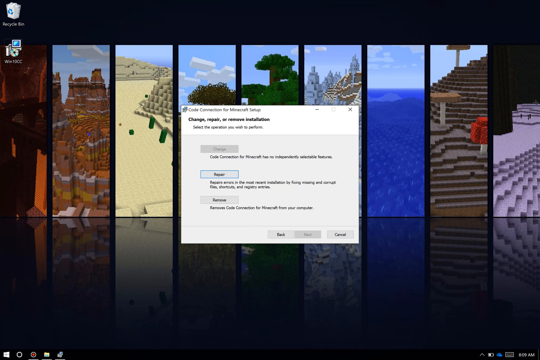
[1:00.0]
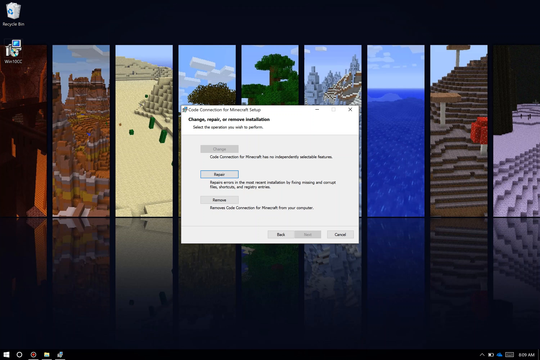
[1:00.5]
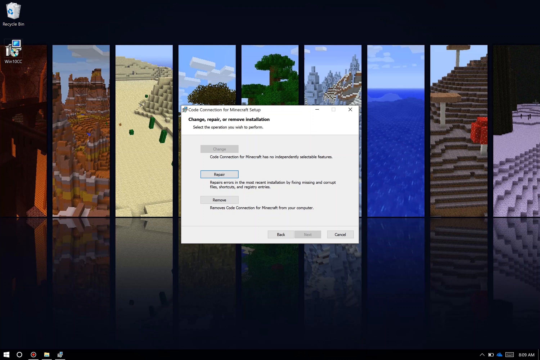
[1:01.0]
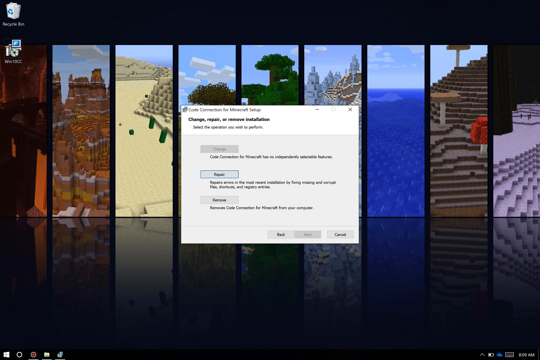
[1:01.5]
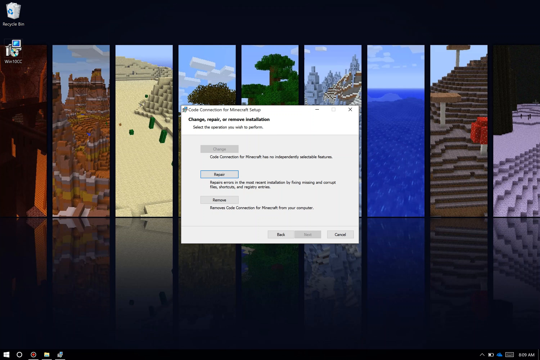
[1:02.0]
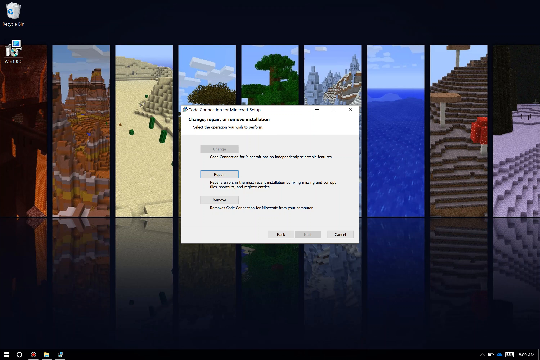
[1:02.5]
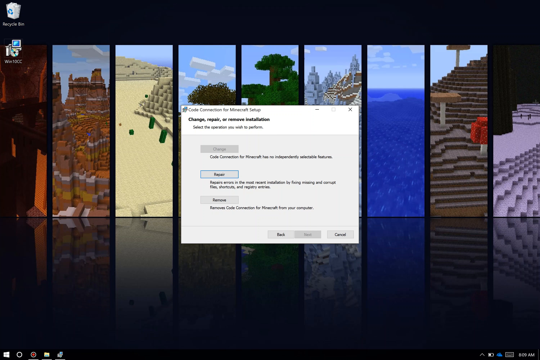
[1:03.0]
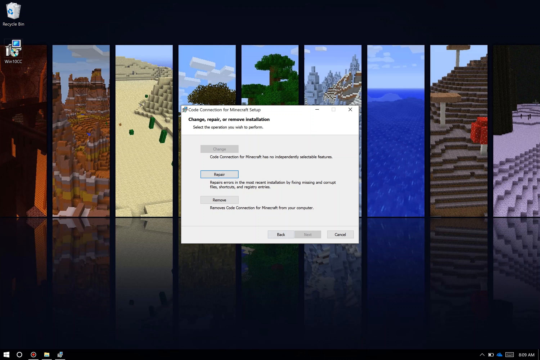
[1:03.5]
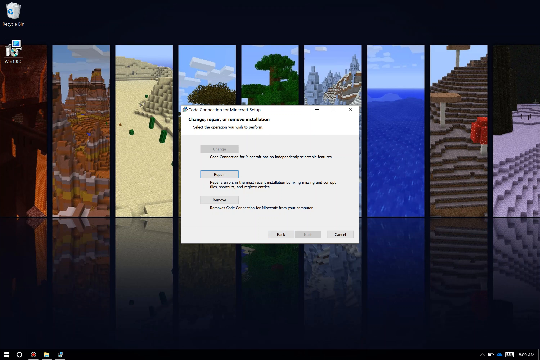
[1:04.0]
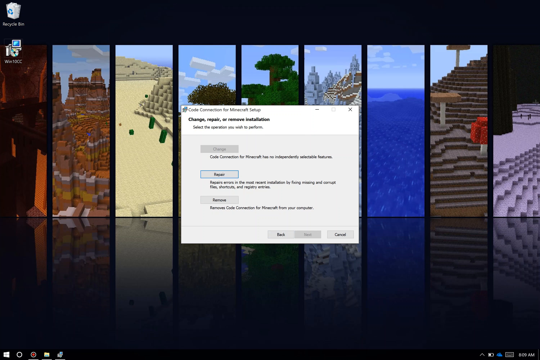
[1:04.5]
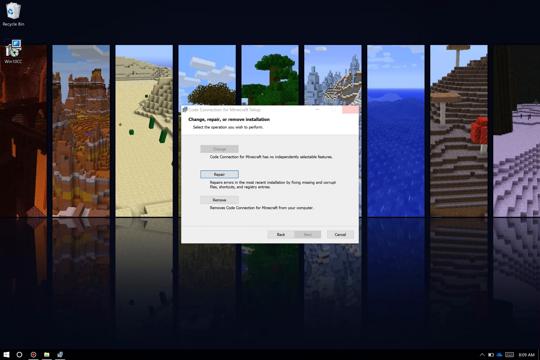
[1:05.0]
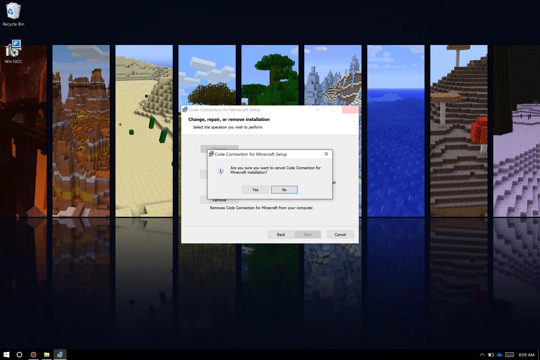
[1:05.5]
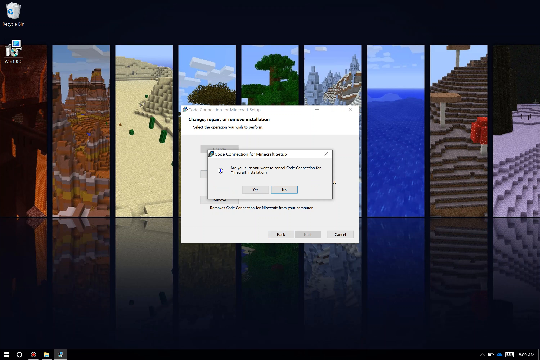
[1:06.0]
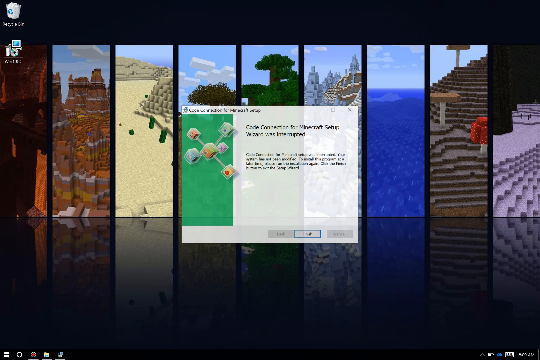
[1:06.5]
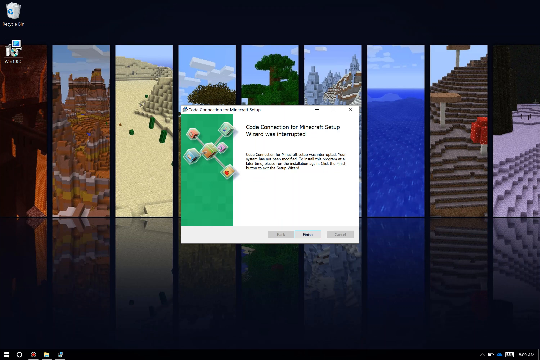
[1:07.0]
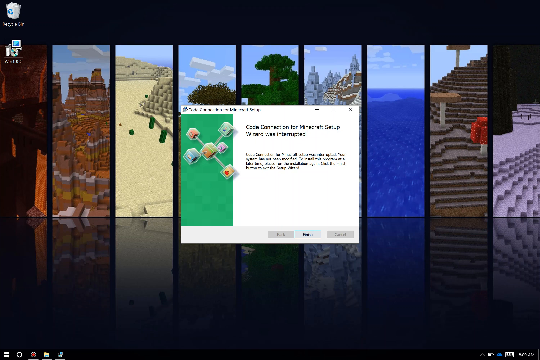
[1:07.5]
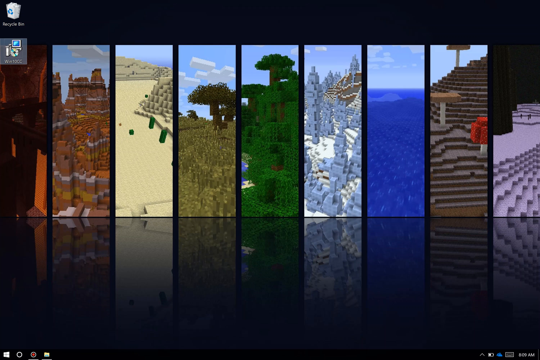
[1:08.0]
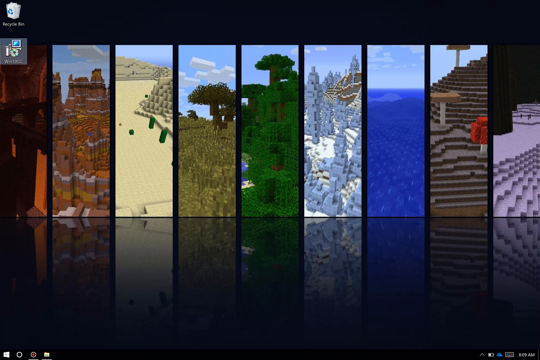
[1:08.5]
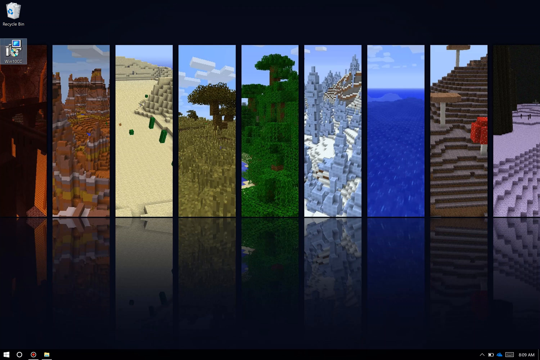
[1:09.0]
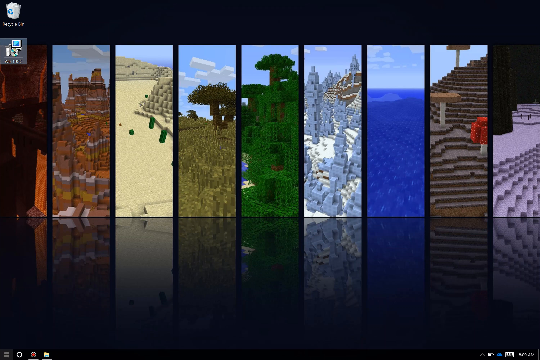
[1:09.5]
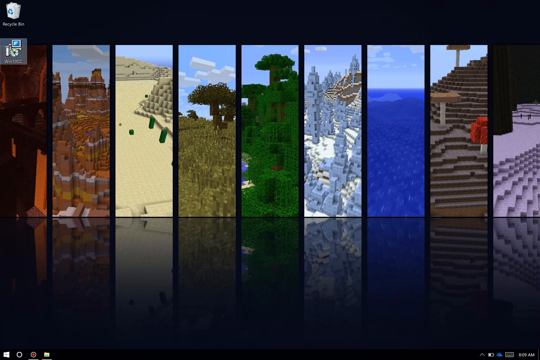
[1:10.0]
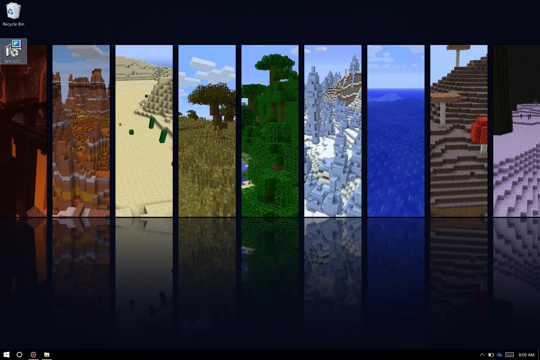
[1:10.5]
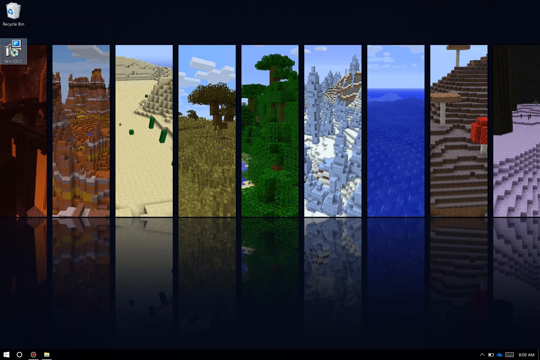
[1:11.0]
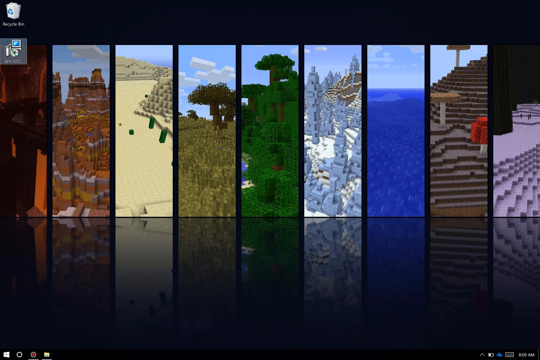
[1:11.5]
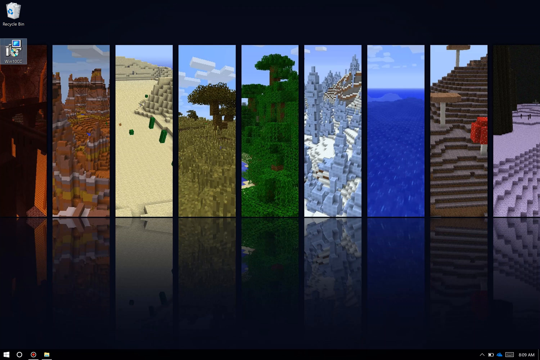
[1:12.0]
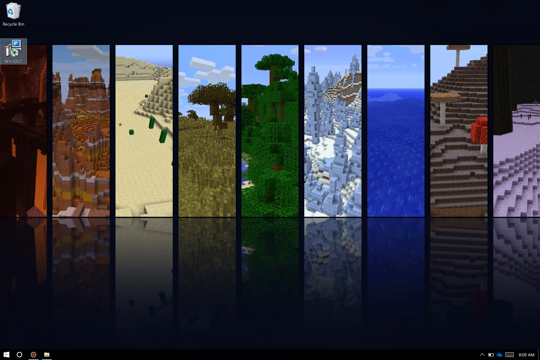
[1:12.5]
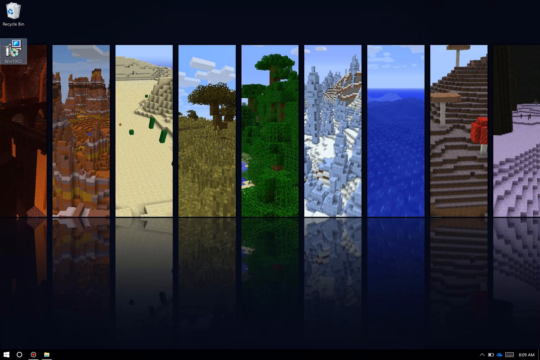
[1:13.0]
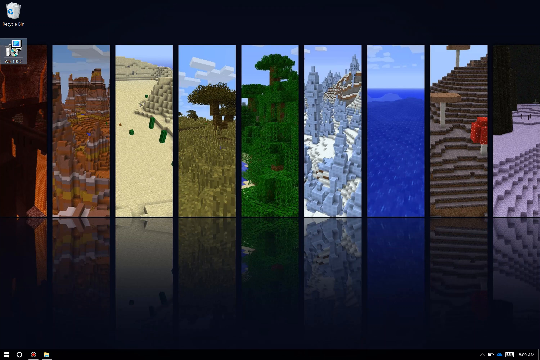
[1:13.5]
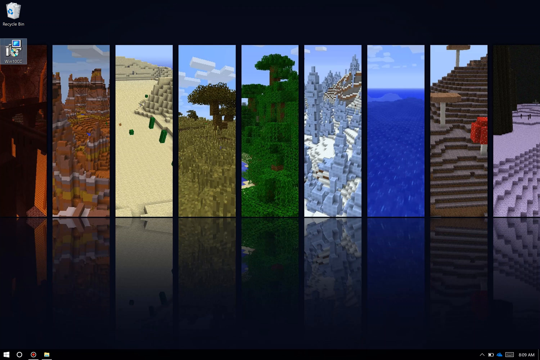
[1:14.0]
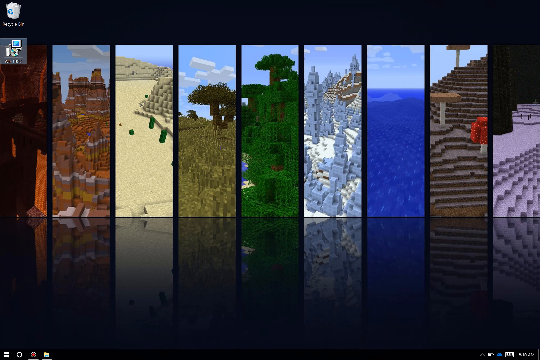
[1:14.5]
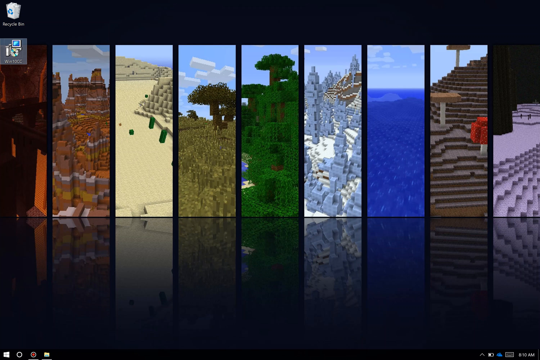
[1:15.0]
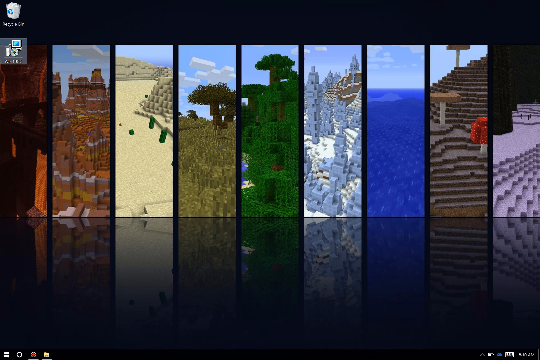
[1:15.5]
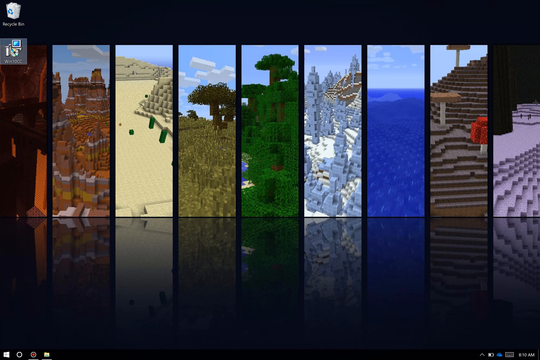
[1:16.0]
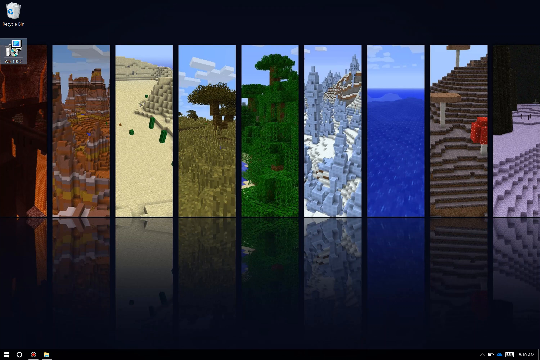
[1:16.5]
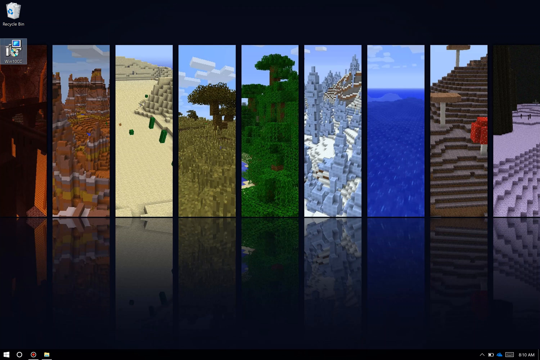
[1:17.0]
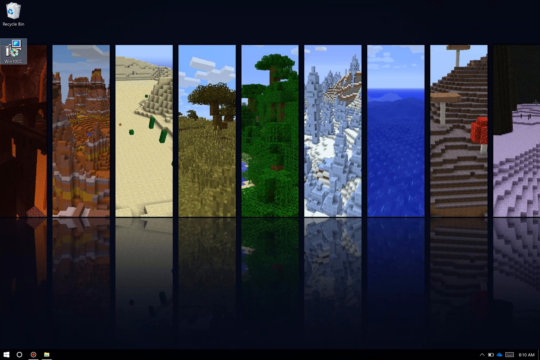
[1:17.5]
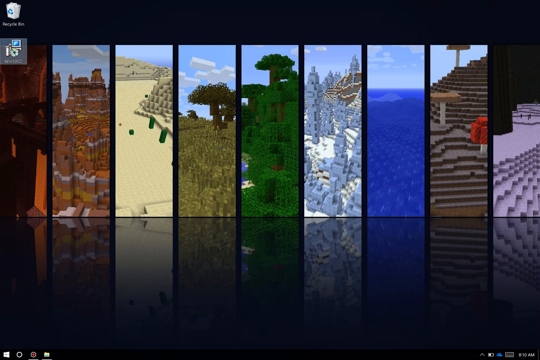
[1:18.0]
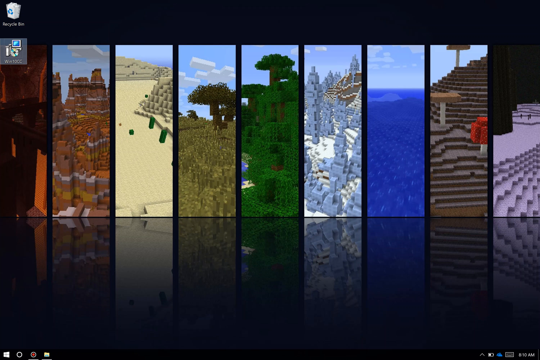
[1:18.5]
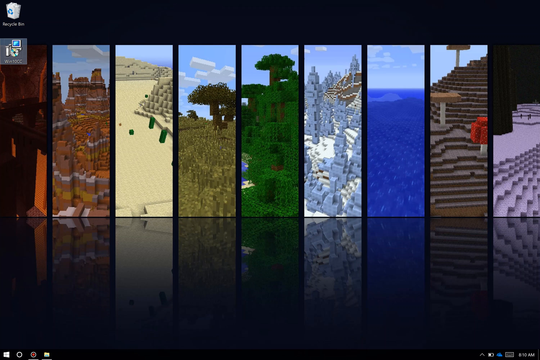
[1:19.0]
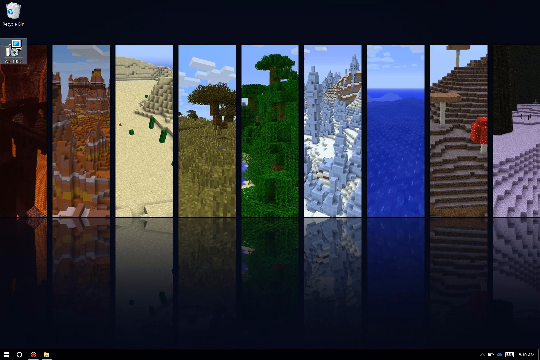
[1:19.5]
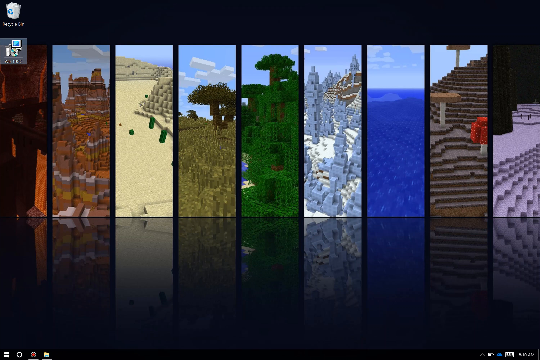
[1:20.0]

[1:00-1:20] The Code Connection for Minecraft setup is still on screen. It says "the code connection for Minecraft setup wizard was interrupted", and he presses finish. The second-to-last terrain on the desktop background has flat autumn trees whose leaves look like blocks of a dark brown-orangish color, and a mushroom-like tree with white bark and red leaves with polka dots all over, looking like a mushroom. The desktop background shows the nine terrains of Minecraft, and a recycling bin icon is right on top of the WinSOCC installation for Minecraft. The third terrain is a sandy desert with cacti of various lengths growing out of the floor, and the second is somewhat mountainous and hilly, kind of like the Grand Canyon, a brightish orange but also brown.